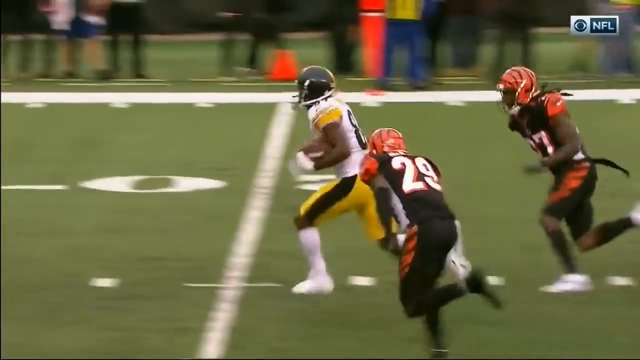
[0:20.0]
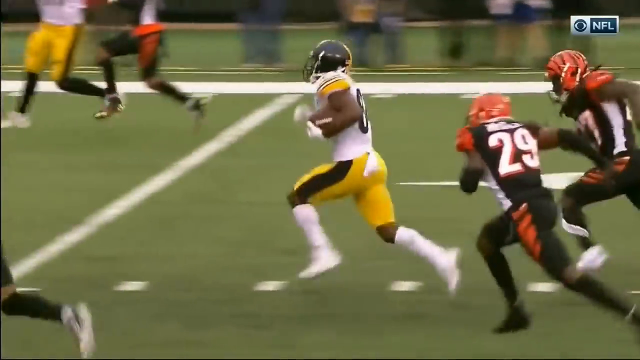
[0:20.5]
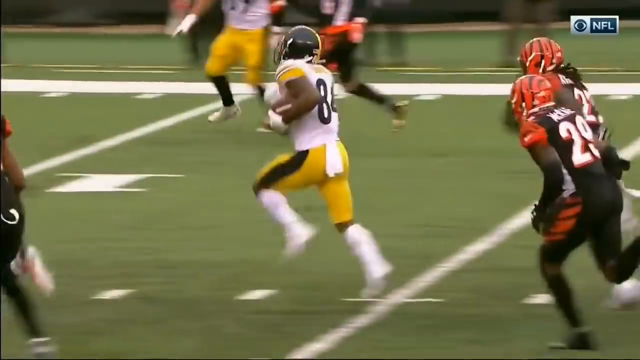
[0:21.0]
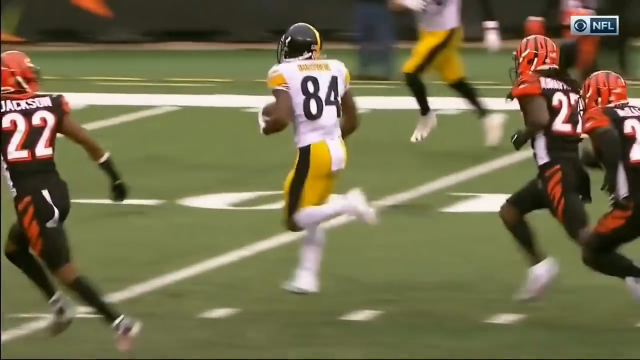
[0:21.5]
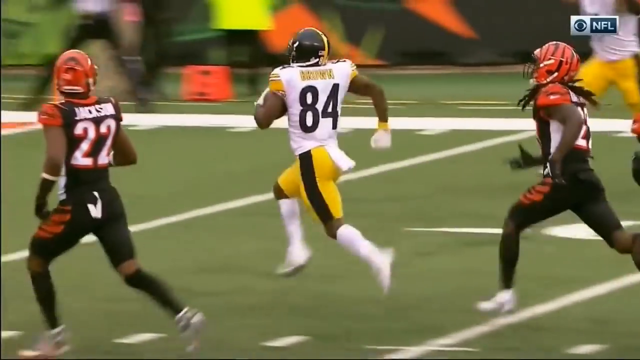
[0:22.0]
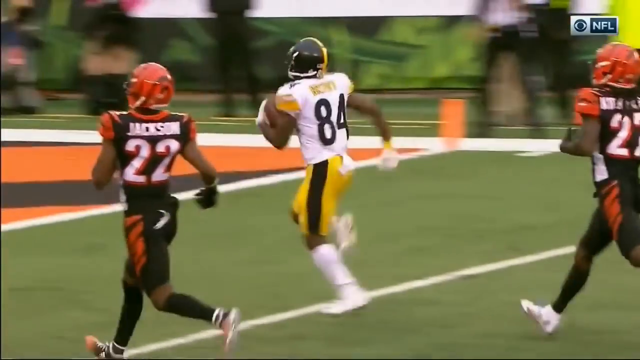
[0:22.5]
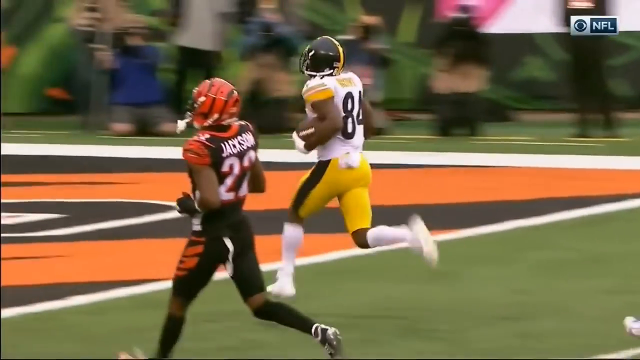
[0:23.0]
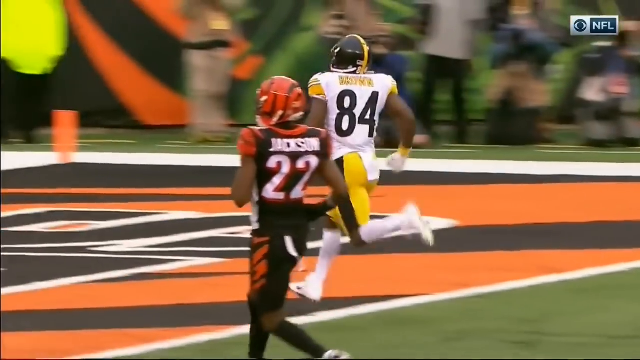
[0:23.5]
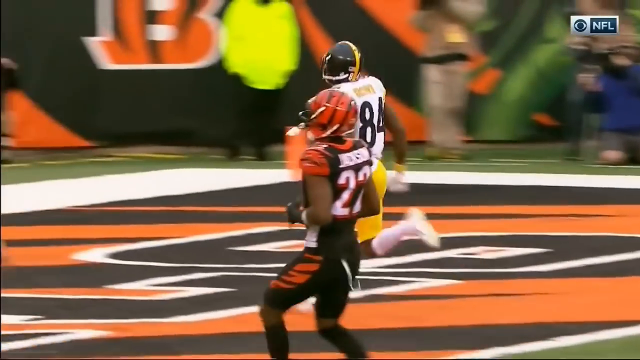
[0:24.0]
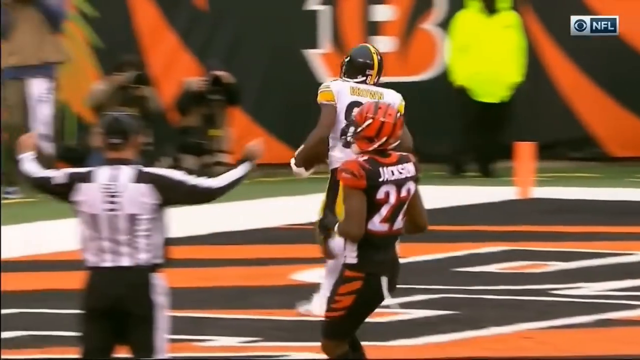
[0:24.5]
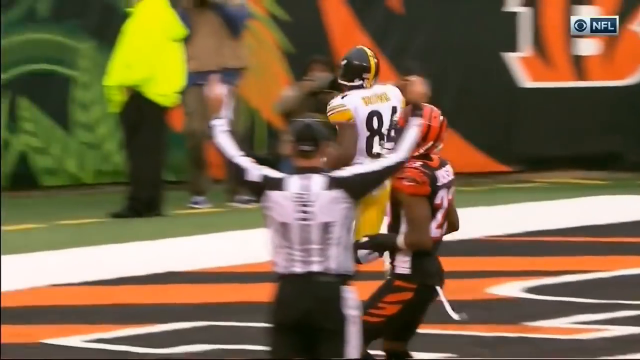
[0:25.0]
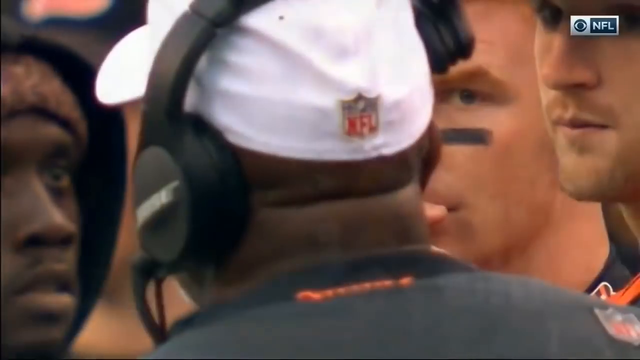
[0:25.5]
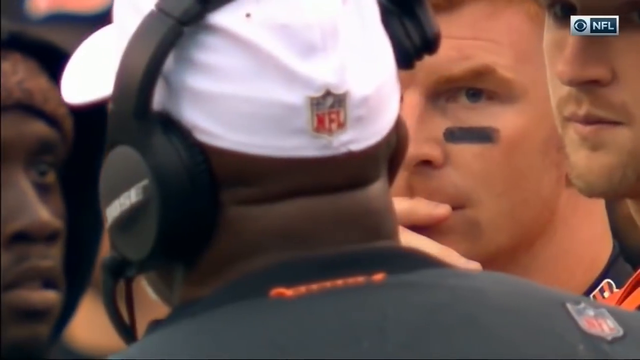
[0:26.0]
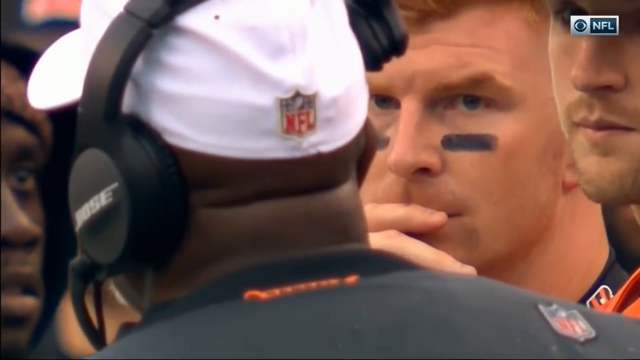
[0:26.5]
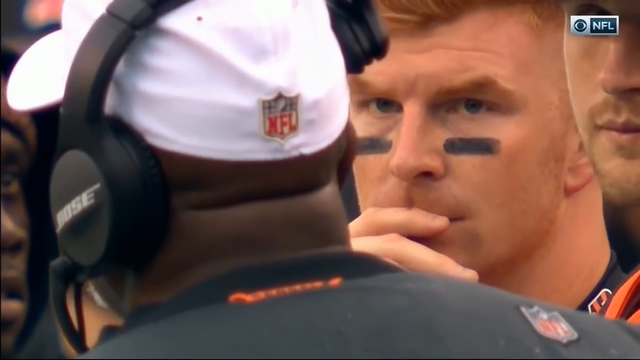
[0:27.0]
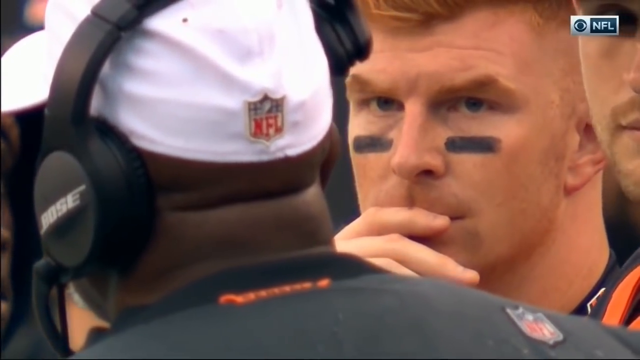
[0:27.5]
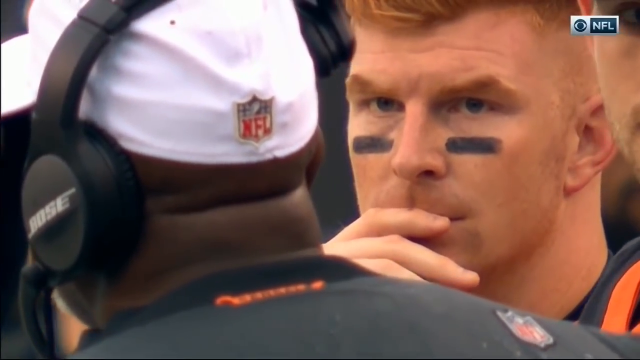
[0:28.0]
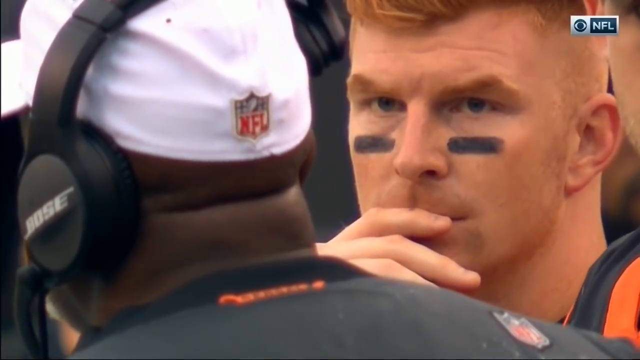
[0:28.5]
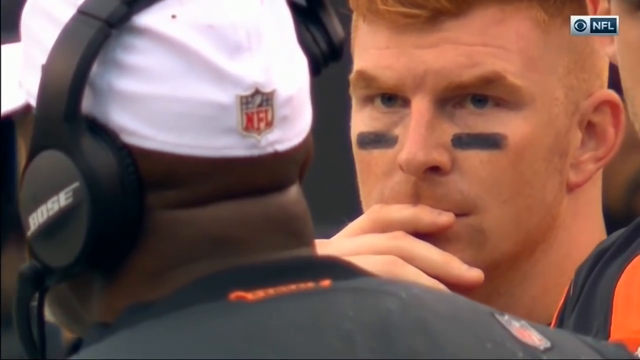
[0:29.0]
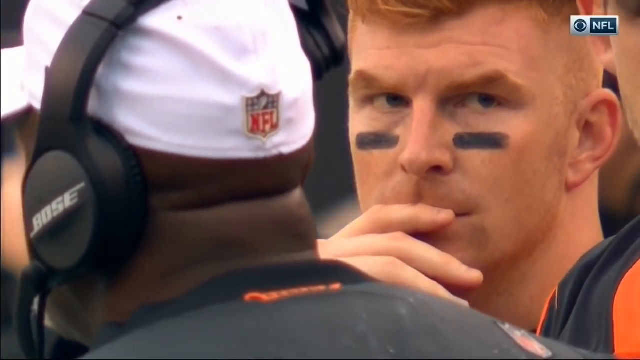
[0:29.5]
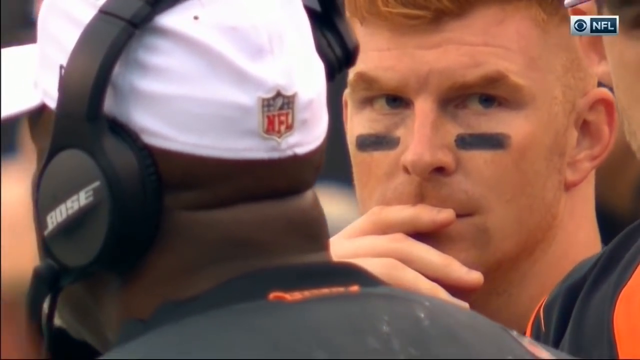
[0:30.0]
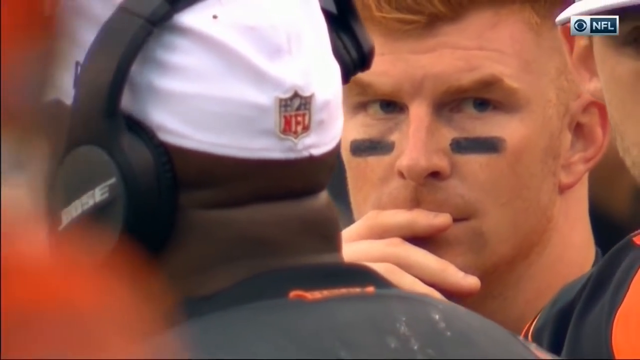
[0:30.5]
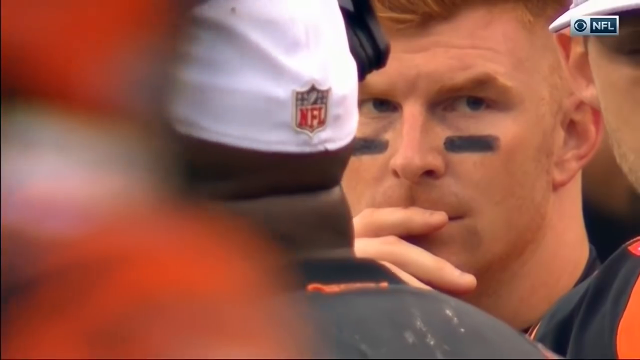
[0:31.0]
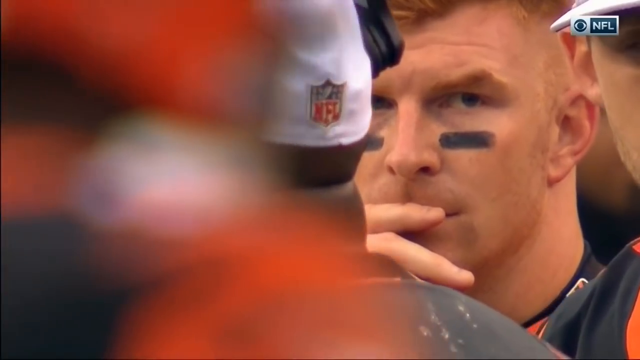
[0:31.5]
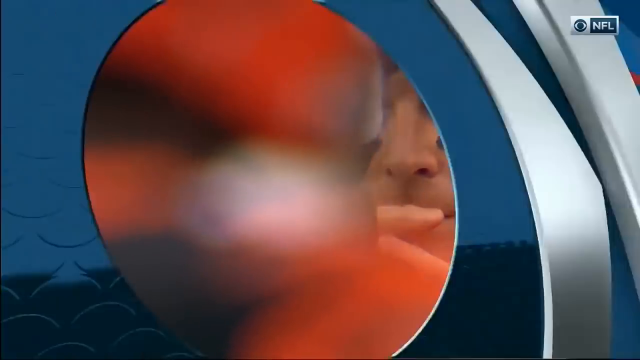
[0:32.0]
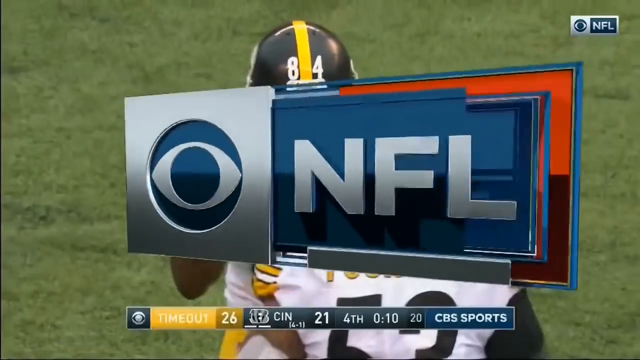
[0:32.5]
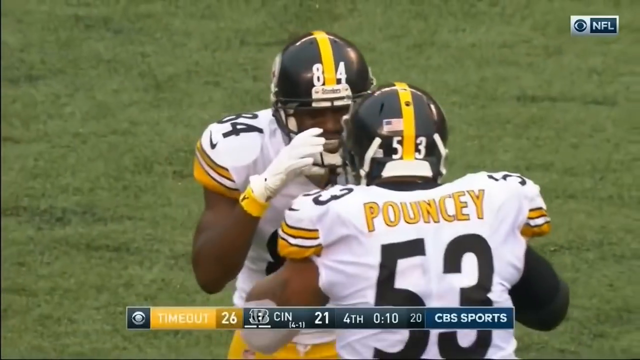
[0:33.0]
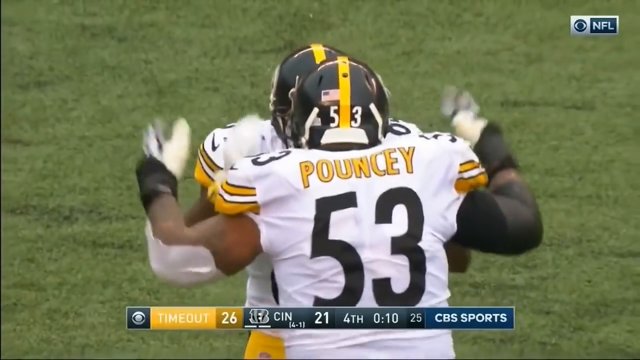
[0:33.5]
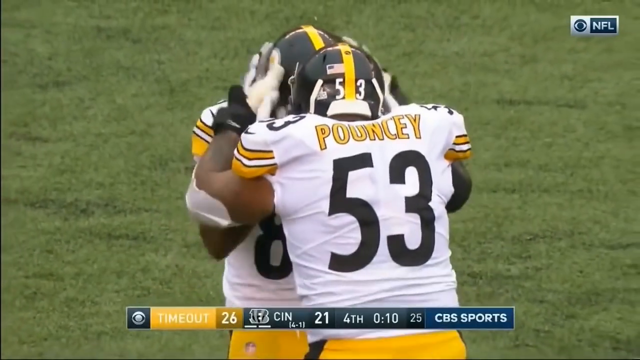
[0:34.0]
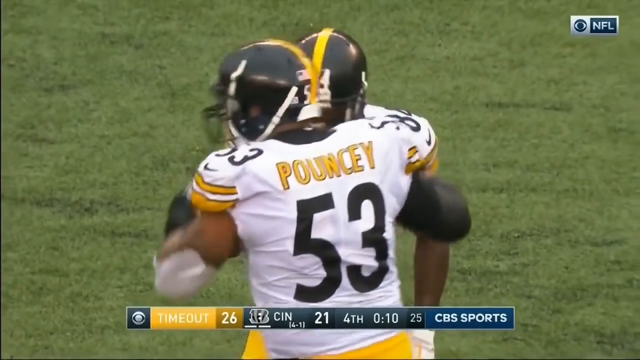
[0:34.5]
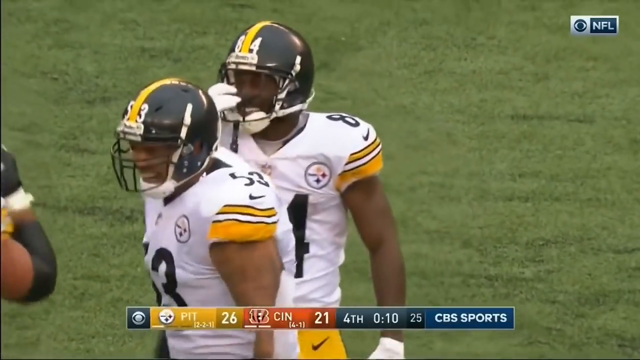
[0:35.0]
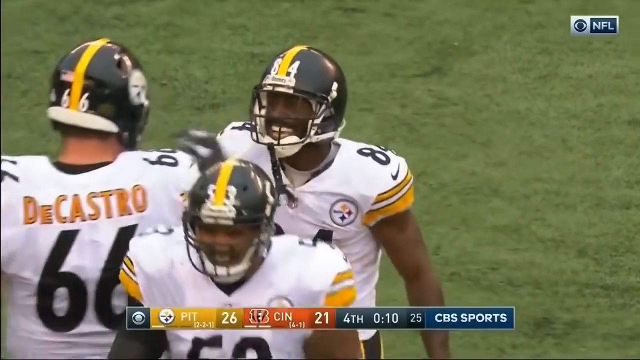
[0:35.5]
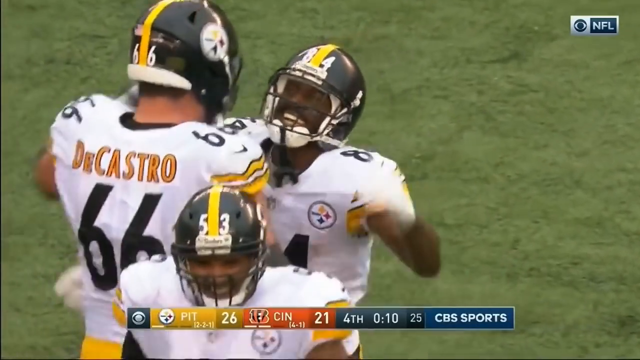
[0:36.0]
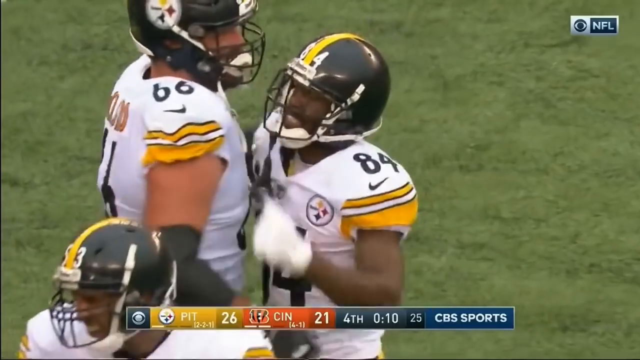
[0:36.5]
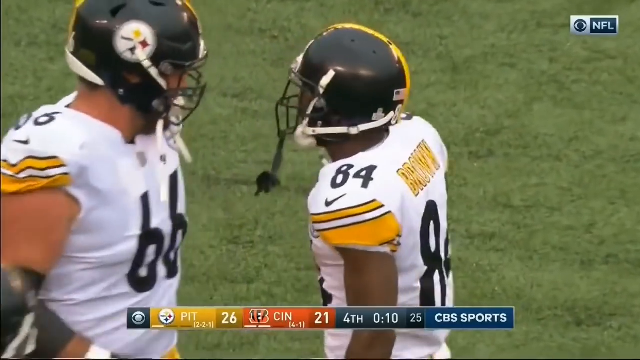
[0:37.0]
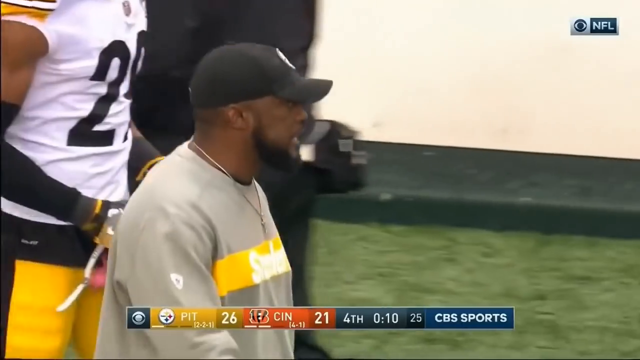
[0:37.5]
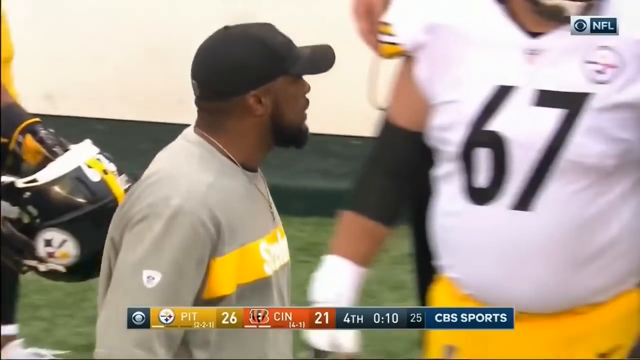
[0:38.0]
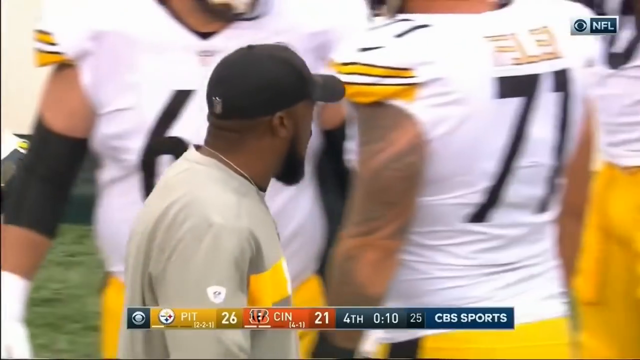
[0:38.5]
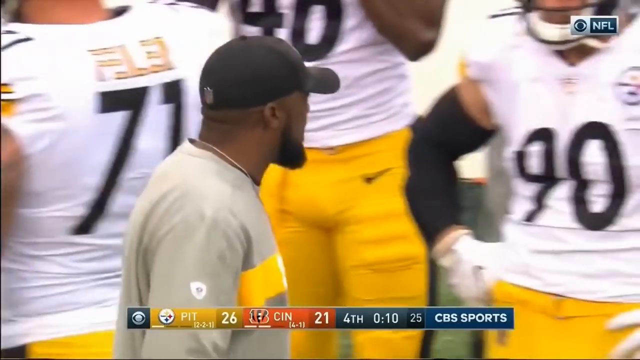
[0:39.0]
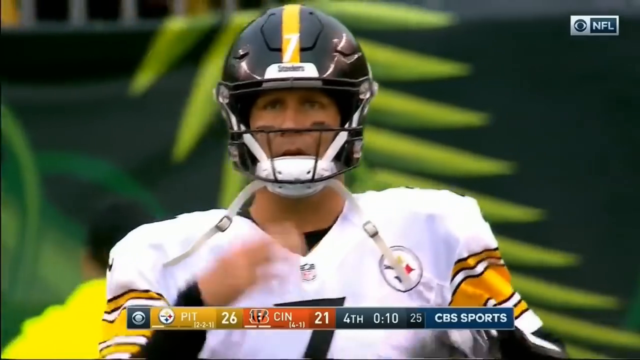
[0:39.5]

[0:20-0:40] The touchdown is replayed from different angles. The first replay is filmed from up high behind the quarterback, looking down at the field; the next is from the sideline, down close to the field. Number 84 runs with the ball as the other players try to catch up to him. He wears white shorts with a black stripe down the sides, and his teammates try to stop the other team's players from reaching him. In the upper right corner of the video is a small grayish rectangle containing a blue rectangle with the gray letters "NFL" and a logo or icon of an eye to the left of them. As number 84 runs into the end zone, number 22 from the other team gives up chasing him. The referee lifts both arms into the air to signal a touchdown.